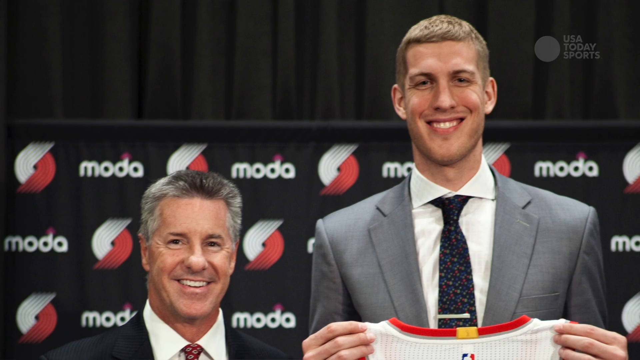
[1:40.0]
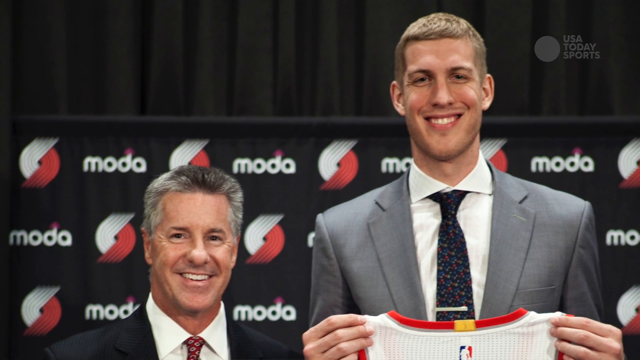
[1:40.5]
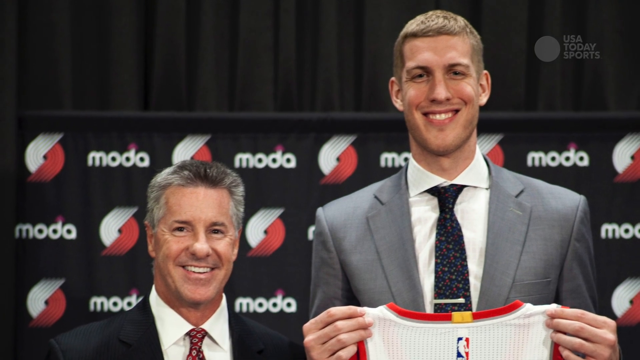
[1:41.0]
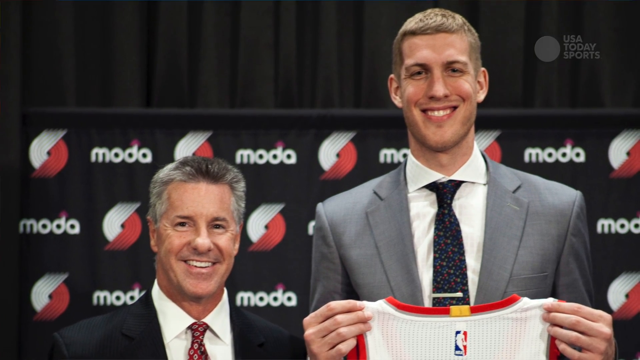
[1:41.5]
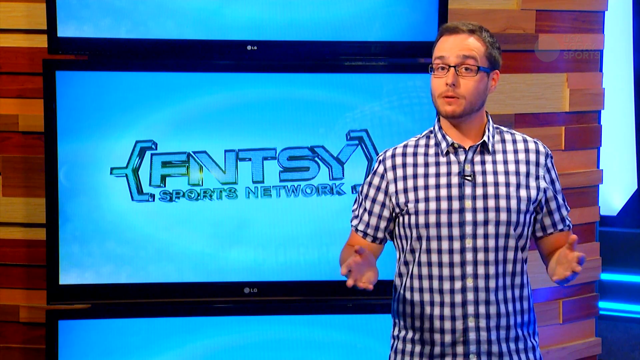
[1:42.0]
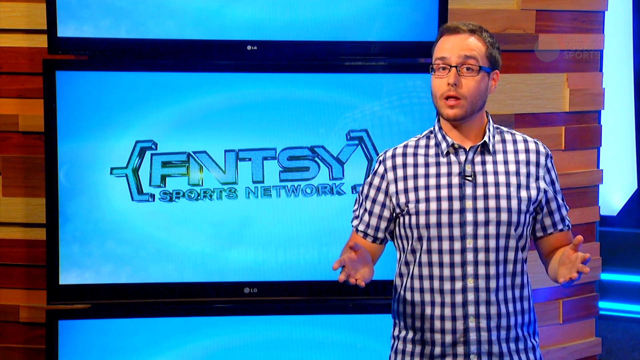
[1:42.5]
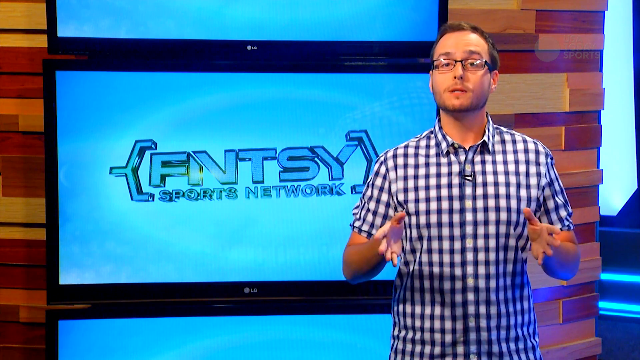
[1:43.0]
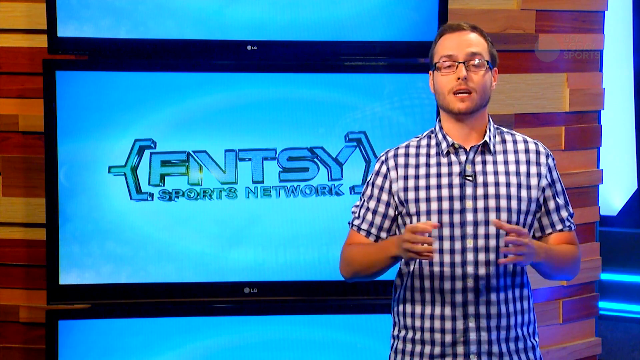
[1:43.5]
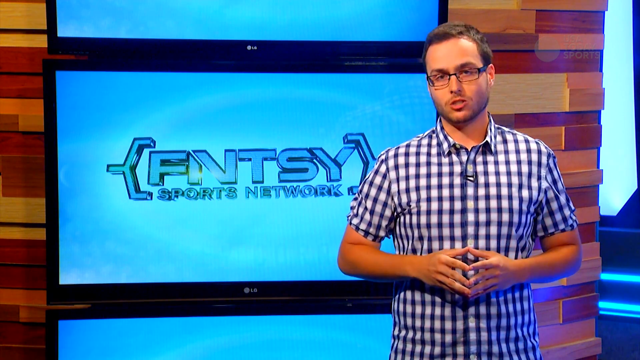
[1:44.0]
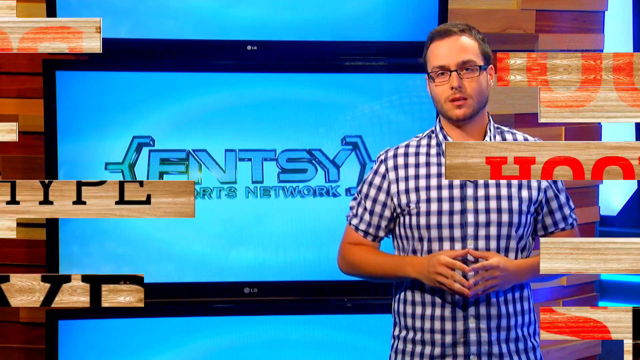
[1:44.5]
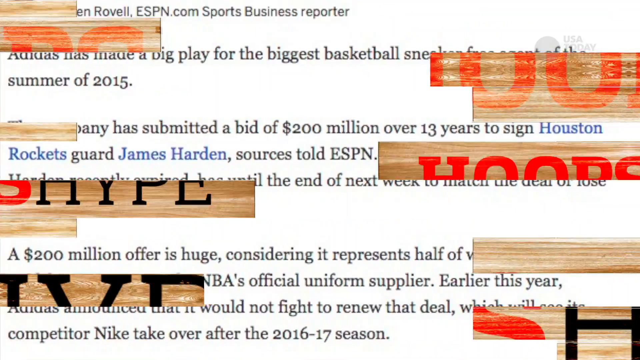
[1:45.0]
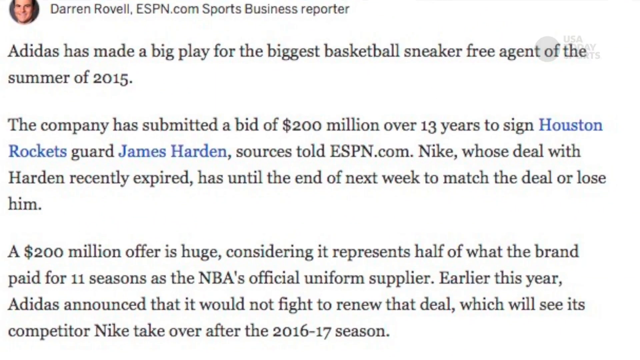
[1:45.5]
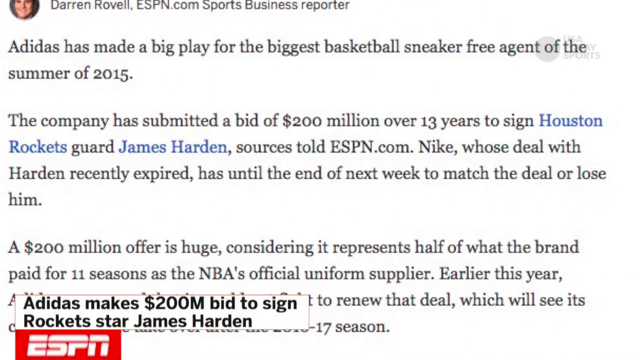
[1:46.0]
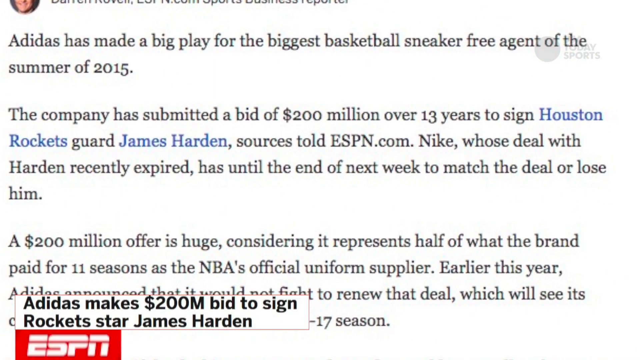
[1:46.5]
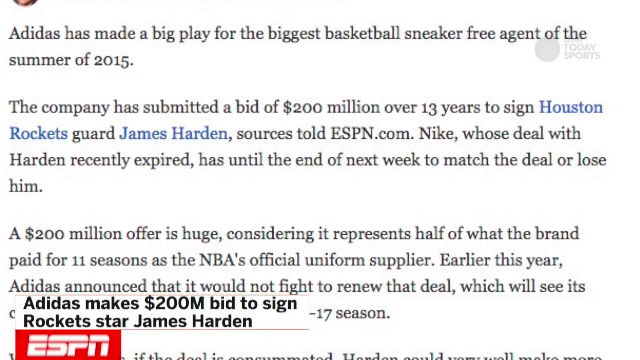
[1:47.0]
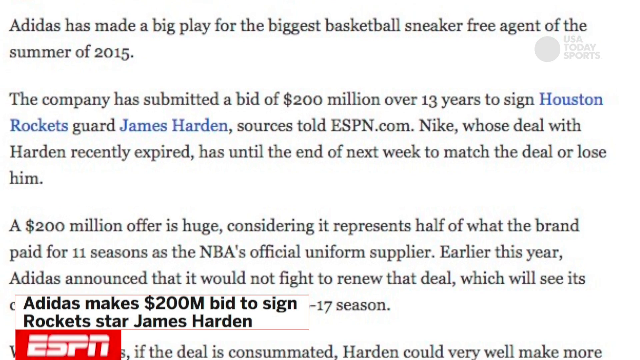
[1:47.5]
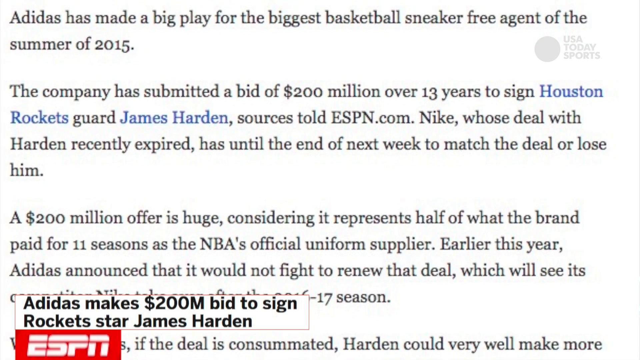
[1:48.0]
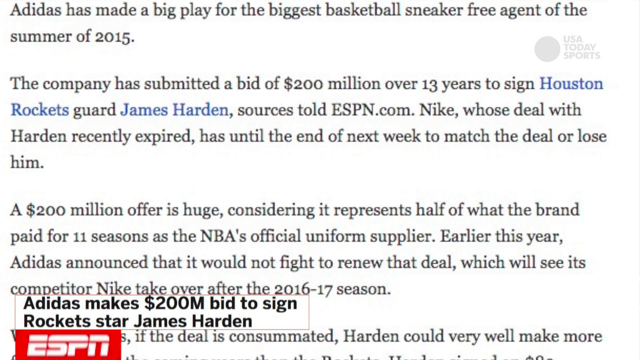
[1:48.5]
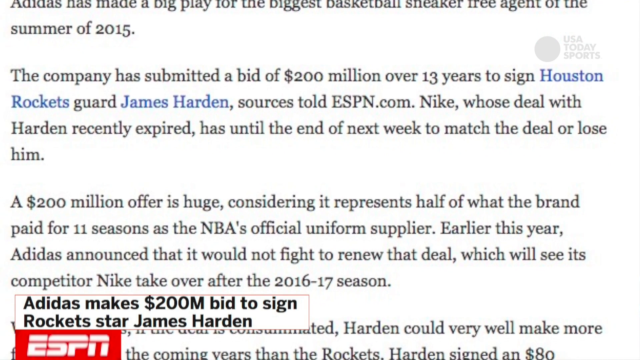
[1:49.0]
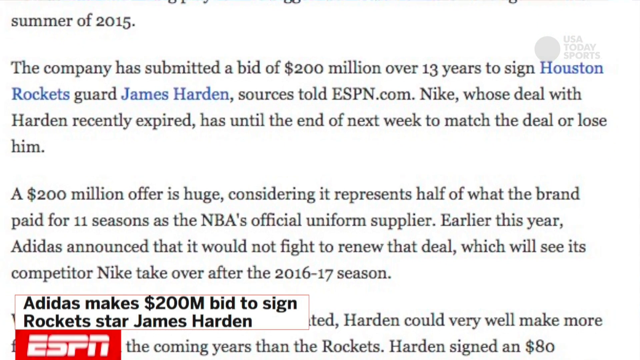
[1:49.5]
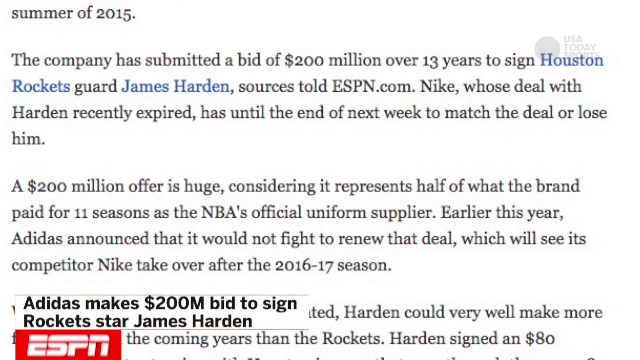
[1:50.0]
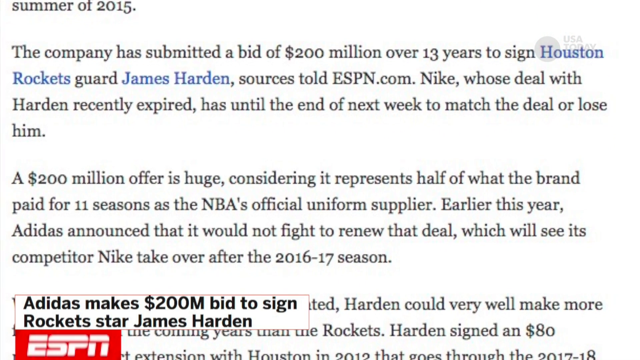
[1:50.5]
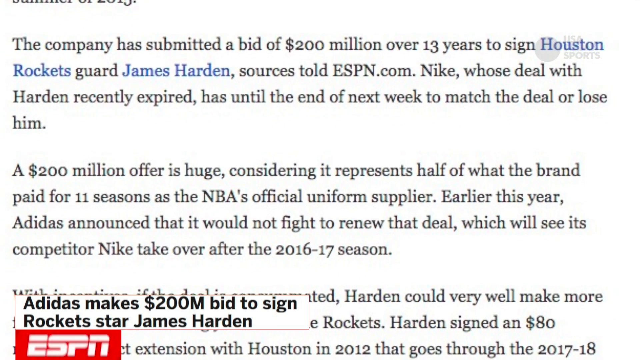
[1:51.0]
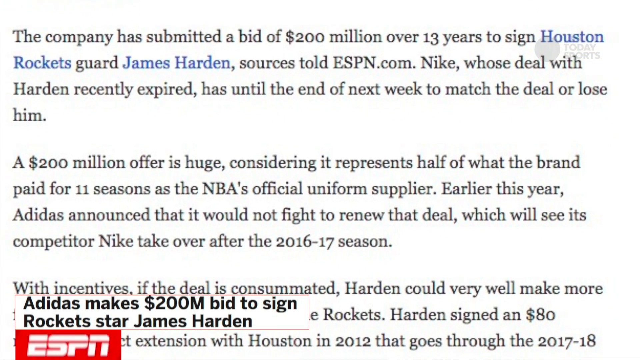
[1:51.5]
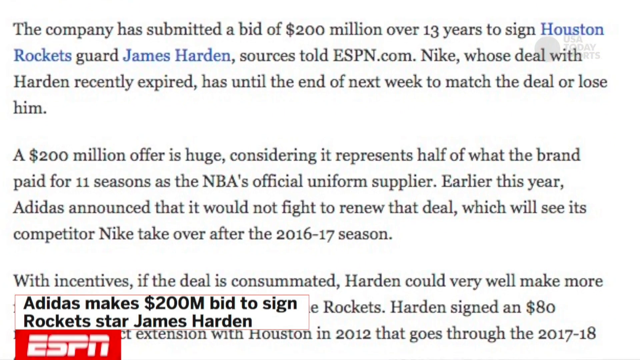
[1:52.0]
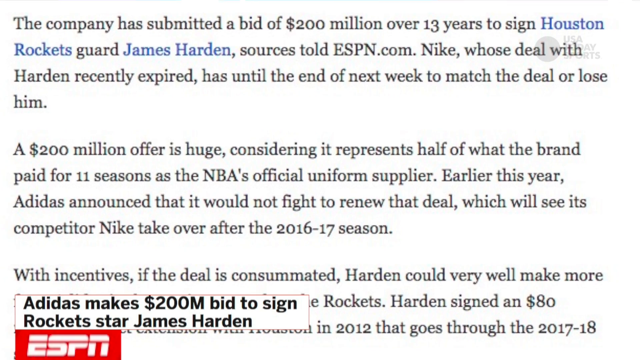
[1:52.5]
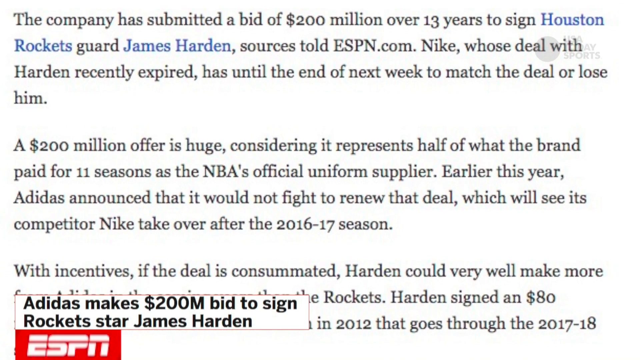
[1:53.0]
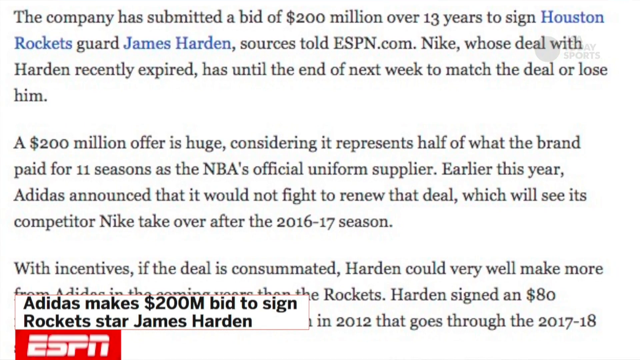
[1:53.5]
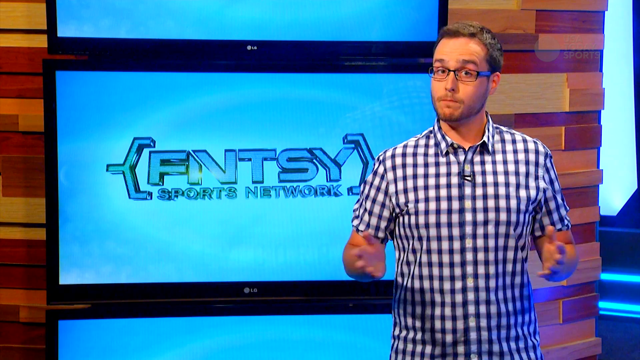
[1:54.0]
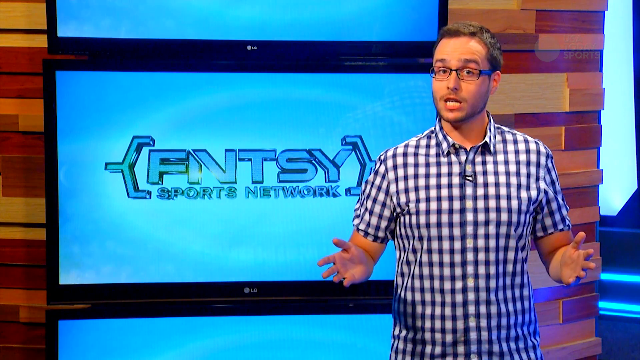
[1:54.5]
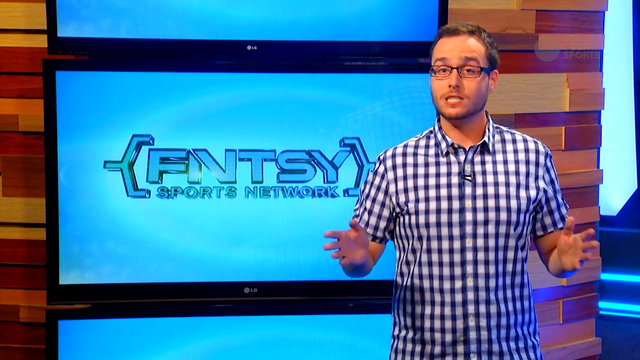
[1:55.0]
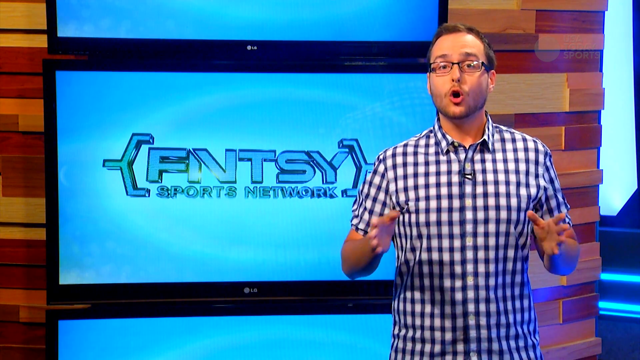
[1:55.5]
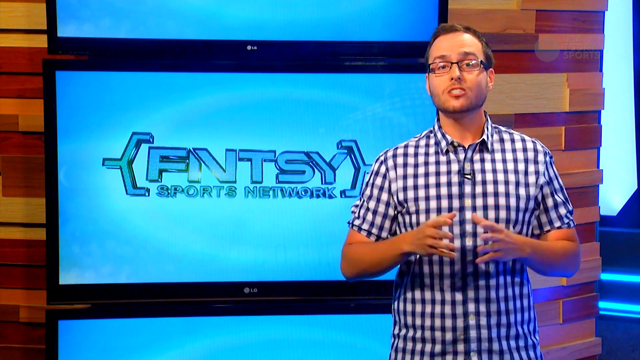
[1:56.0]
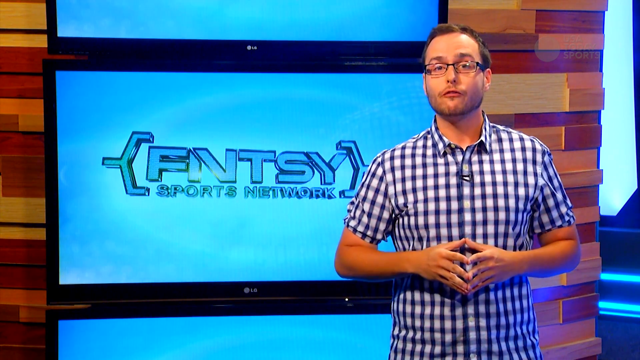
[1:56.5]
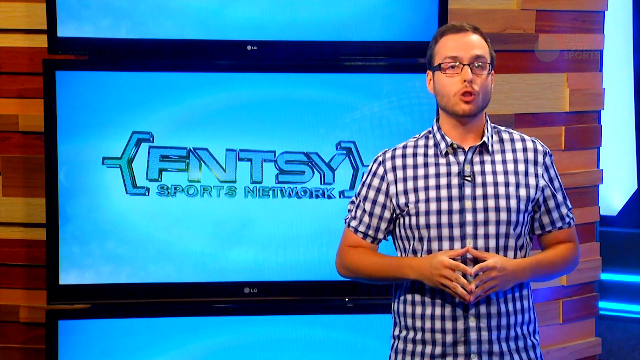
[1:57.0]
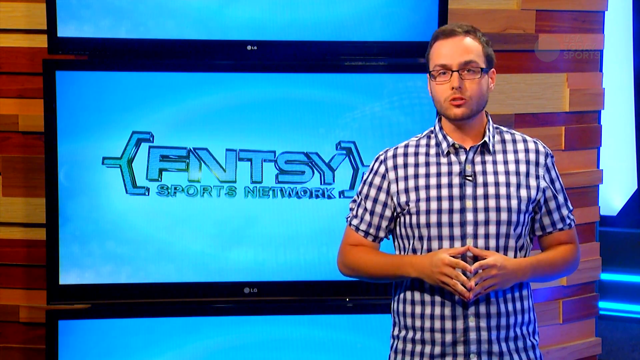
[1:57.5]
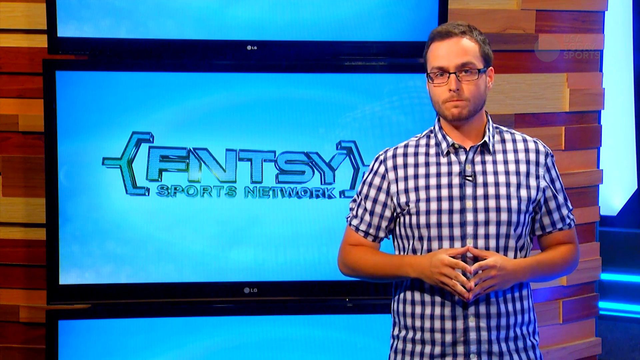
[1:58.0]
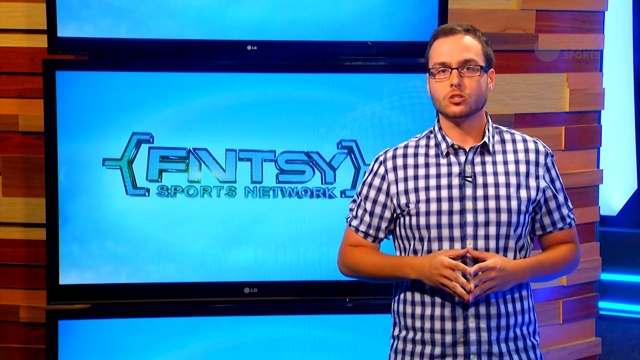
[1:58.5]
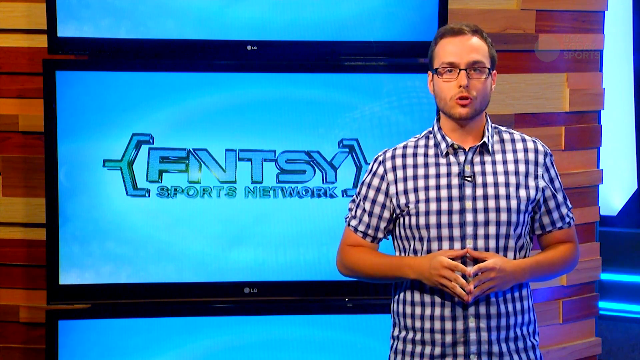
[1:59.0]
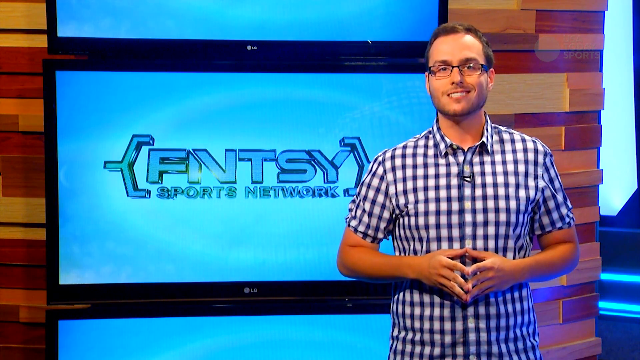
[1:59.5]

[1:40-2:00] A very tall man and a much shorter older man stand in front of a screen that says "Moda," which is mostly black with a little red. A sportscaster talks in front of a very bright blue screen that says "Fantasy Sports Network," with Fantasy abbreviated "FNTSY." He wears a plaid shirt with a mic attached to the front, glasses, a beard and brown hair, and touches his fingertips together. The young tall player, dressed in a suit and tie, is with his much shorter coach; apparently the team just acquired him. A scrolling screen of information says "Adidas has made a big play for the biggest basketball sneaker free agent of the summer of 2015. It's Houston Rockets guard James Harden," in a write-up about Nike, and then says "Adidas makes $200 million bid." The tall man is presumably James Harden.